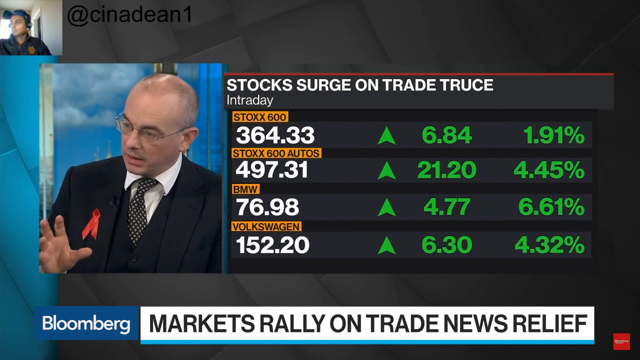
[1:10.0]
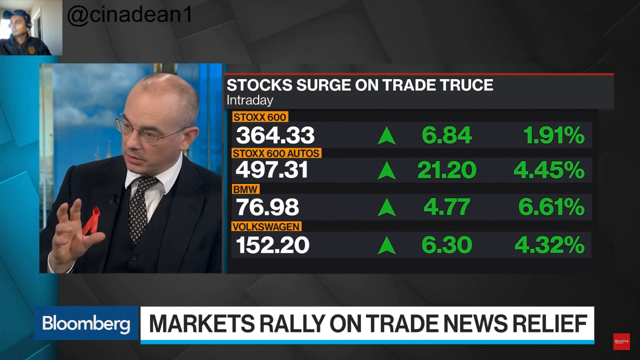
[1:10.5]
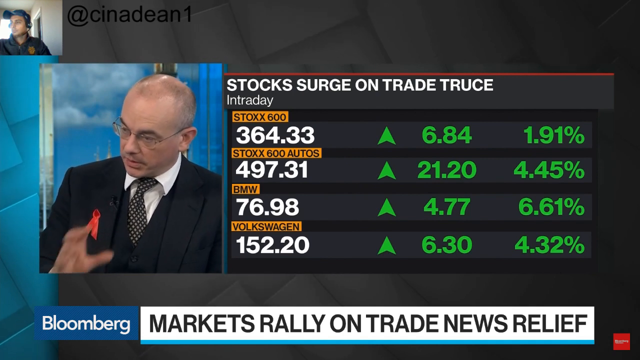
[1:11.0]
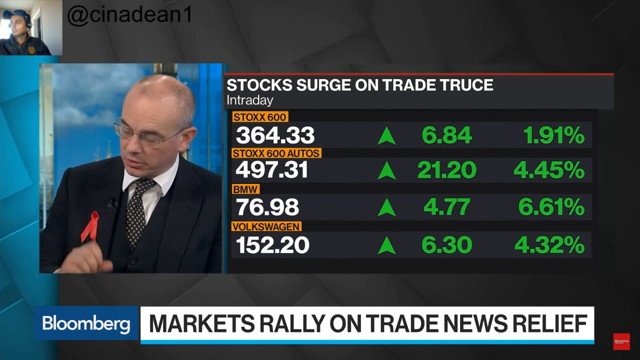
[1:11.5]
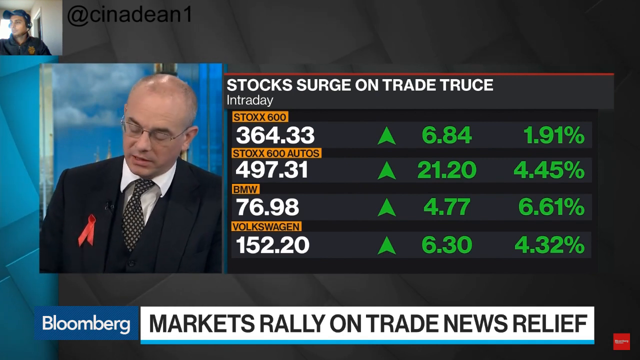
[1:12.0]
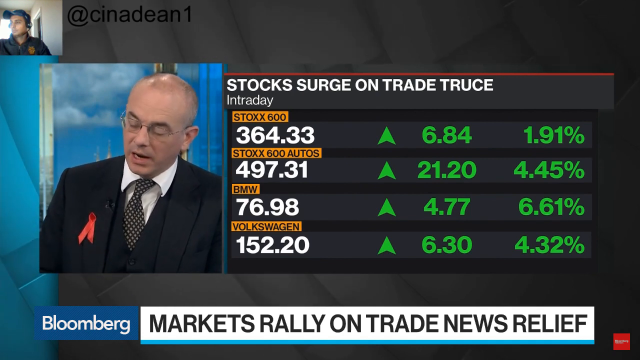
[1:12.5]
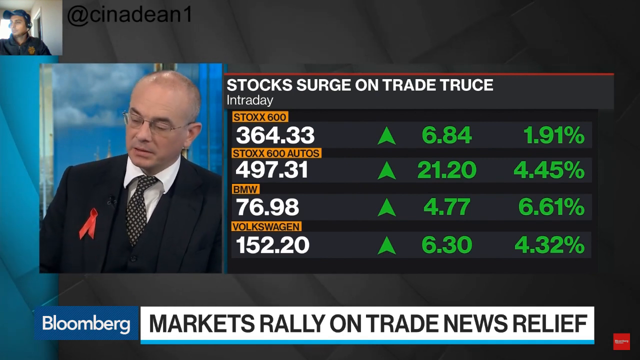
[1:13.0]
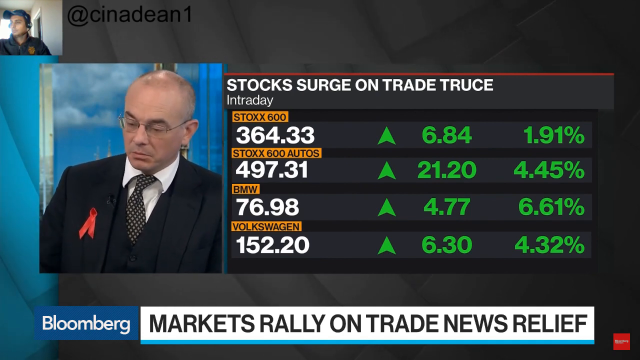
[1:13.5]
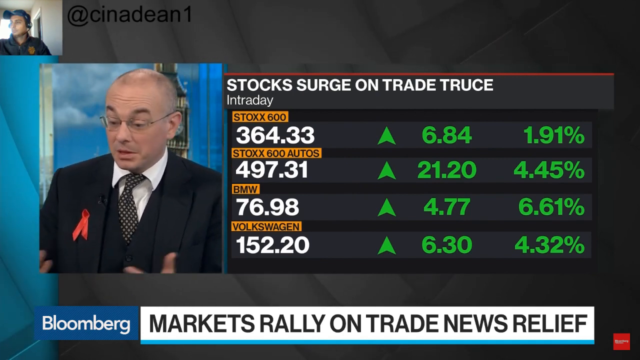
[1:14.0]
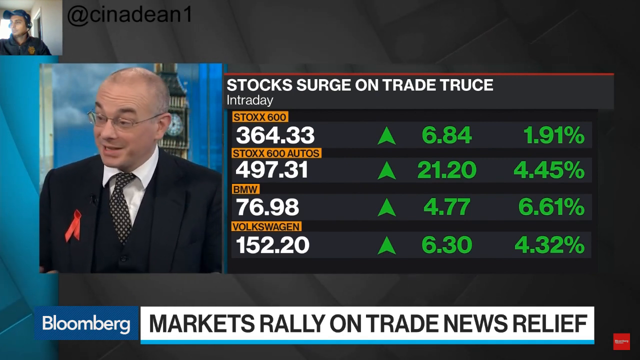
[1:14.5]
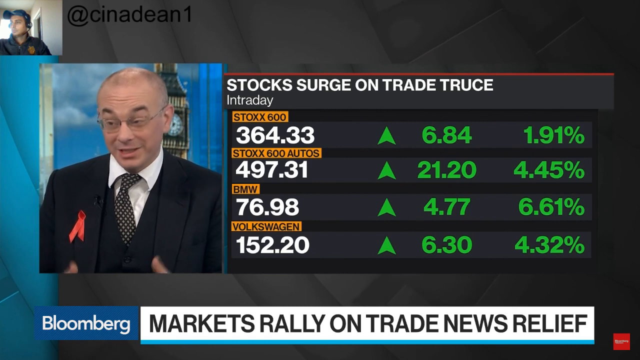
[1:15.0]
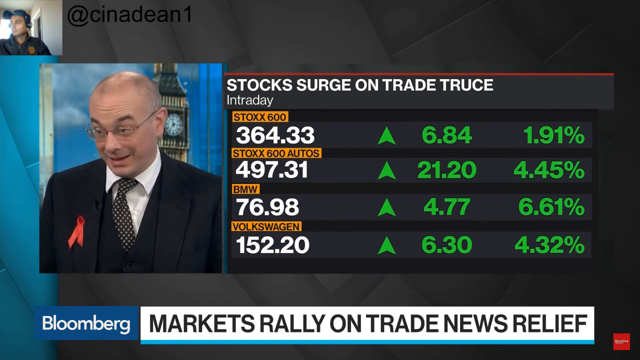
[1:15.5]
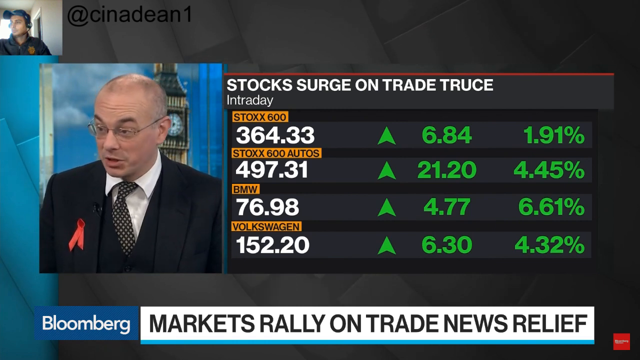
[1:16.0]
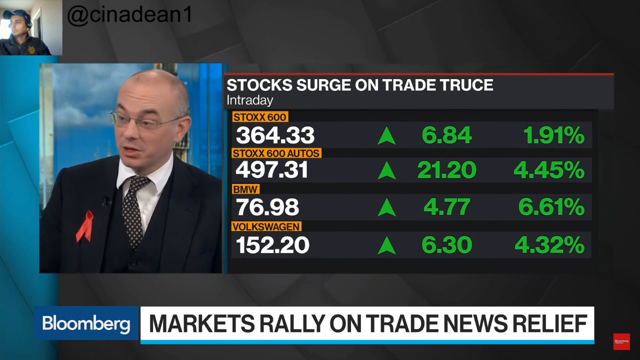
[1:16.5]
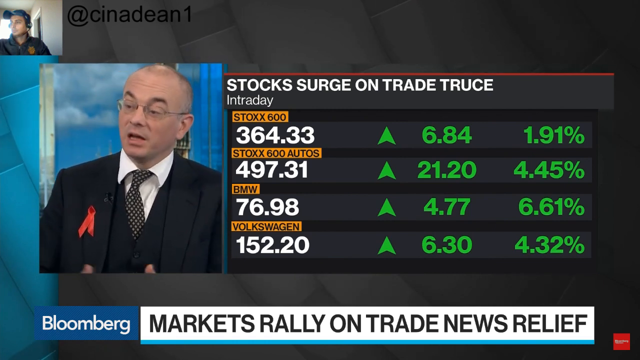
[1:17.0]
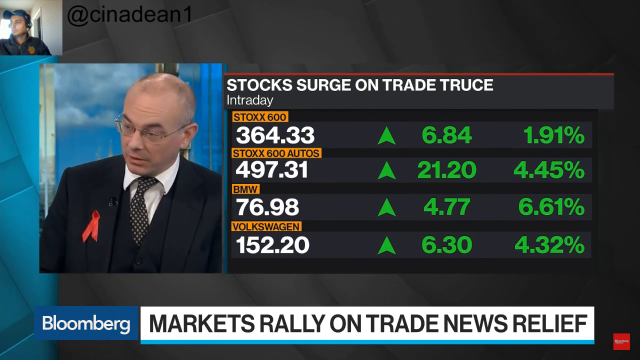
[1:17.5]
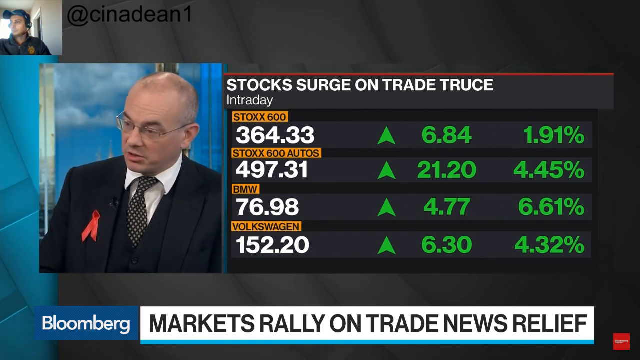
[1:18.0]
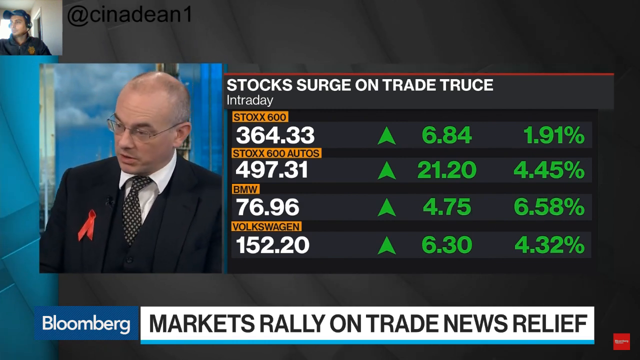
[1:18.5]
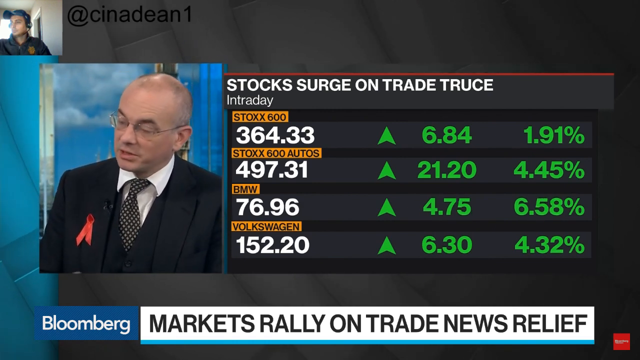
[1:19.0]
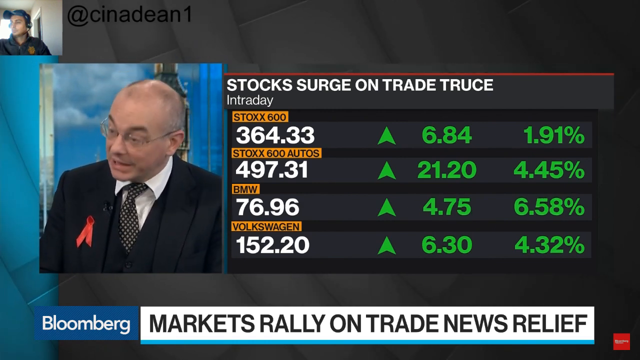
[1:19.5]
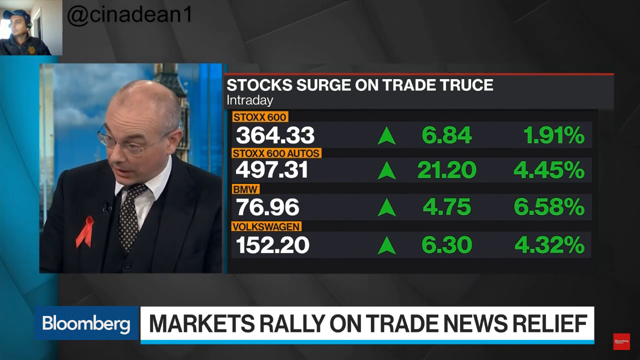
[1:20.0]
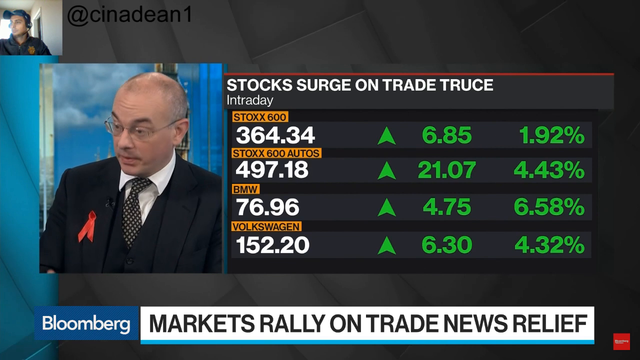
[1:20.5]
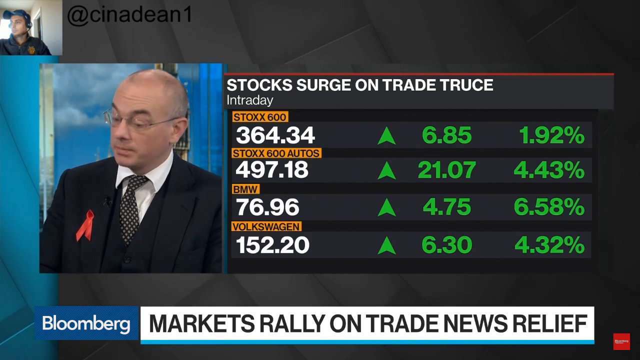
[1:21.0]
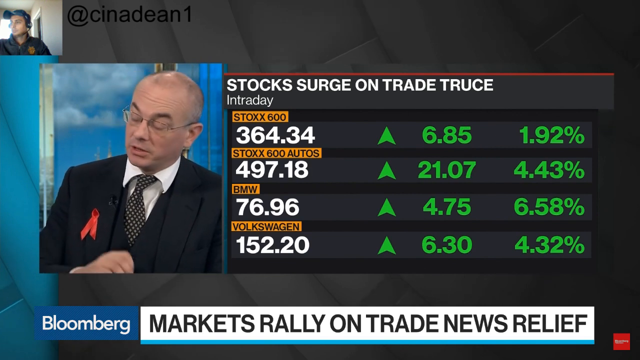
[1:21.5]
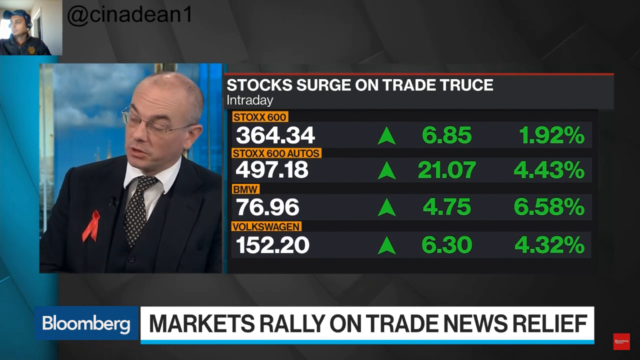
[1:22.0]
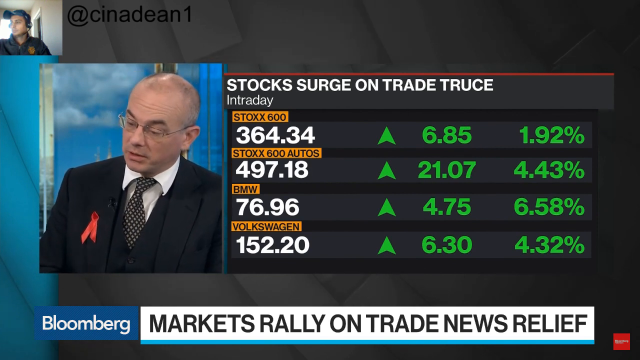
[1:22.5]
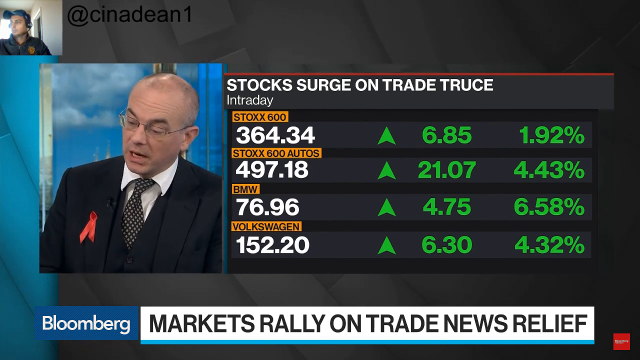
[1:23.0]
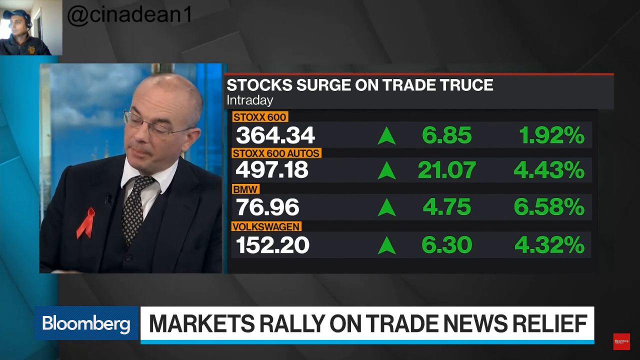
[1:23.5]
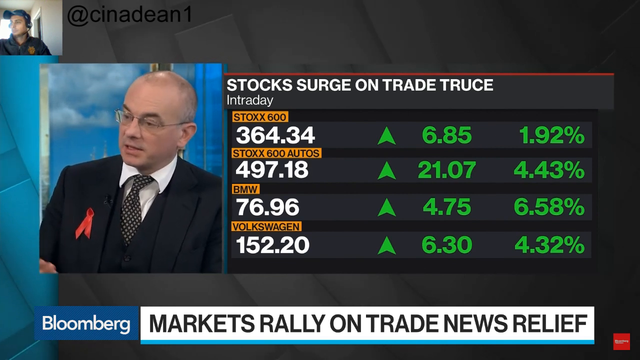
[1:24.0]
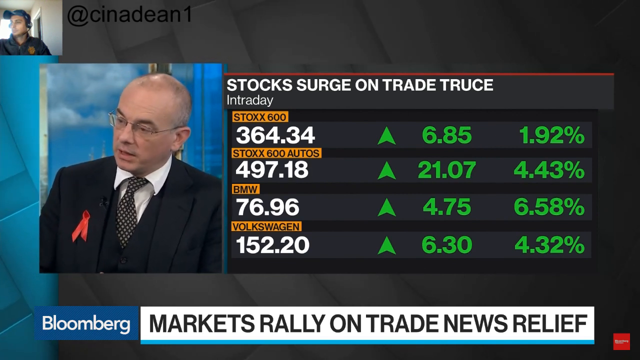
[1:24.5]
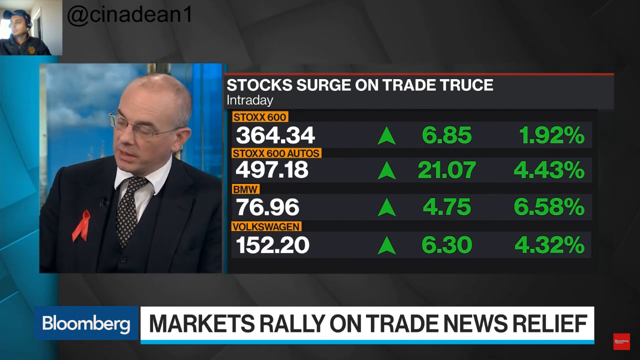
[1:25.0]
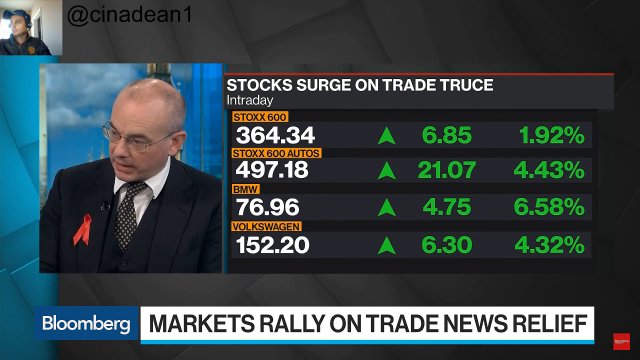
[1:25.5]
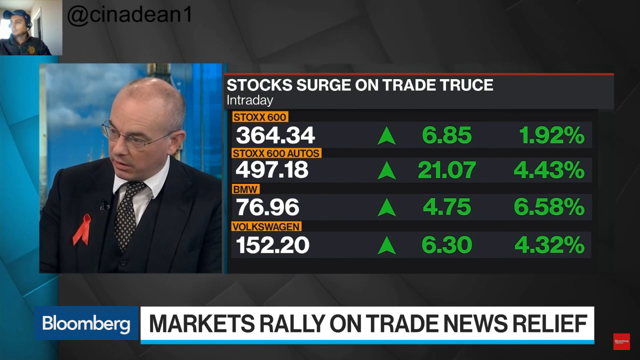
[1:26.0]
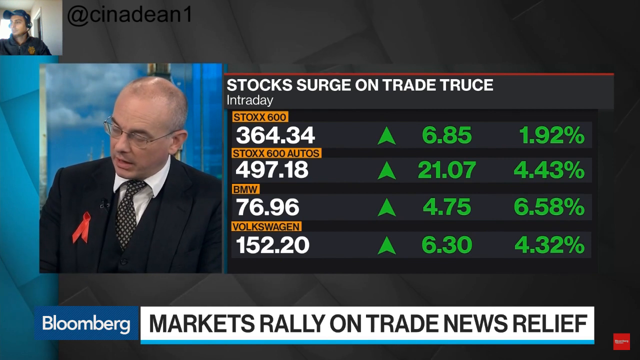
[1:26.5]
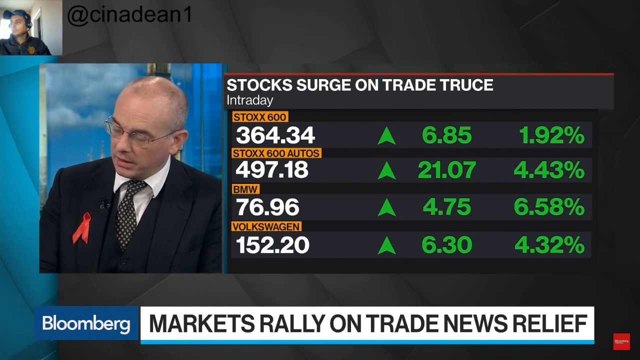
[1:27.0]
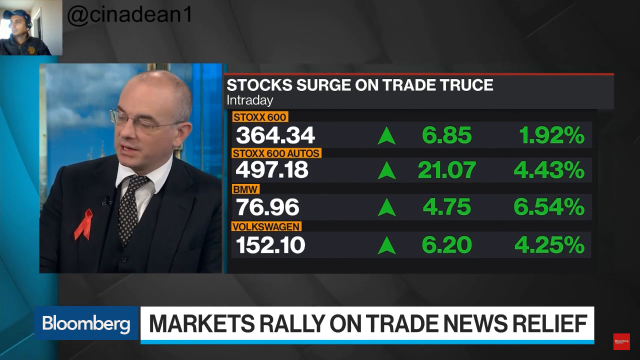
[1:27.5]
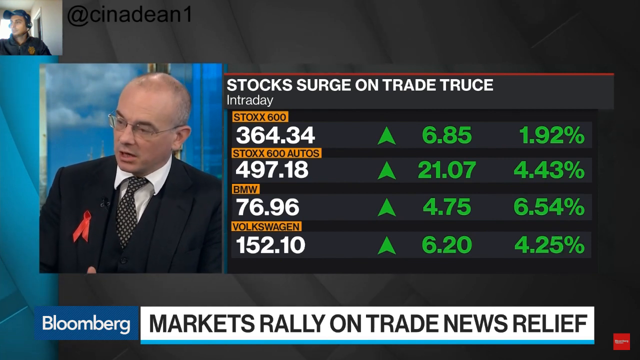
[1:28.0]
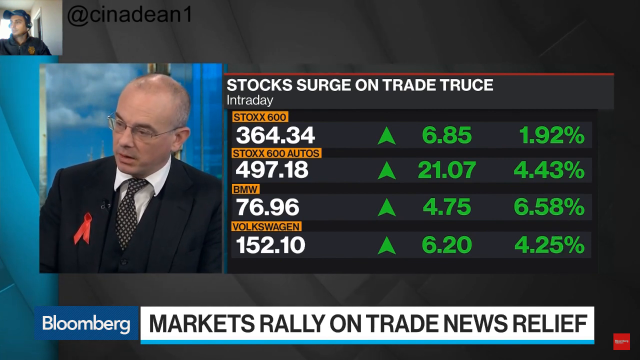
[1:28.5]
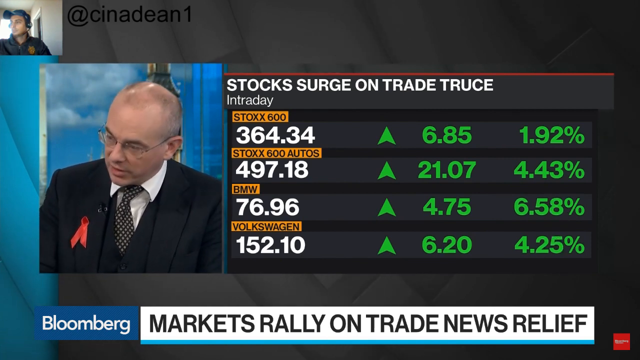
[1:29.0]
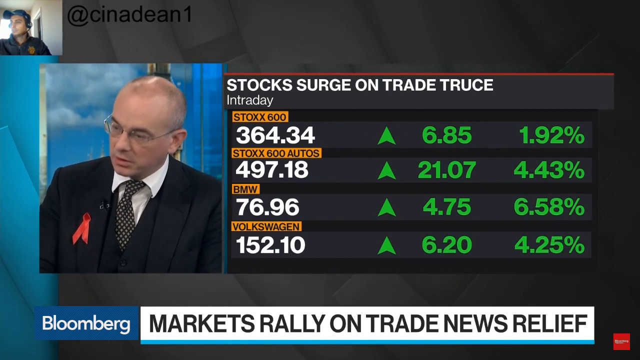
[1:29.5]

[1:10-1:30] The man in the baseball cap and dark jacket is still in the upper left, with the handle "CANADAN1". In a box in the middle toward the left is a close-up of Paul Donovan, wearing a black suit, a black vest and a red ribbon on his right lapel; he wears glasses and is balding, with short cropped hair. To the right, a graphic about stocks and a trade truce lists Stocks 600 up 6.84 points, 1.91%, along with Stocks 600 Autos, BMW at 76.98 and a figure of 152.20, all up by amounts ranging from 4.77 points to 21.2 points. The bottom reads "Bloomberg" and "markets rally on trade news relief" as Donovan continues talking.